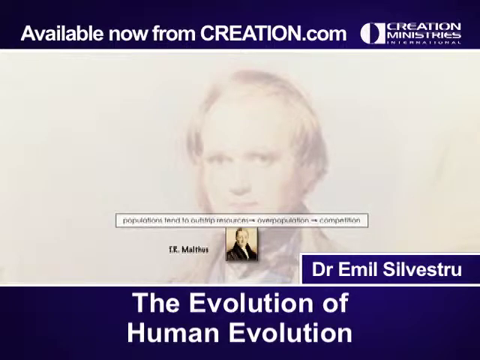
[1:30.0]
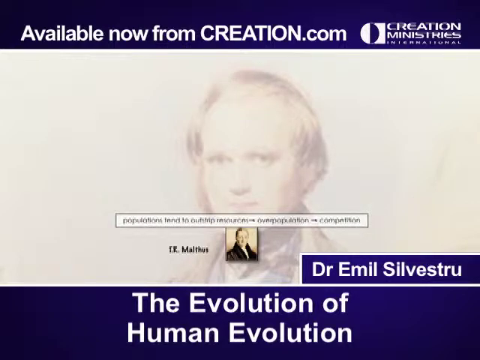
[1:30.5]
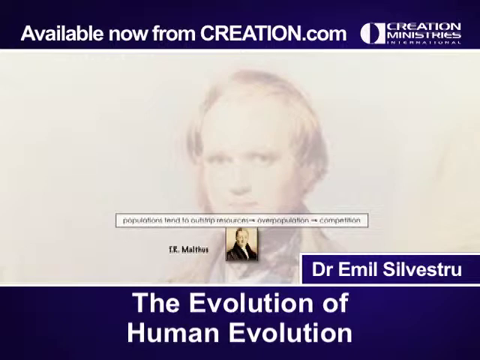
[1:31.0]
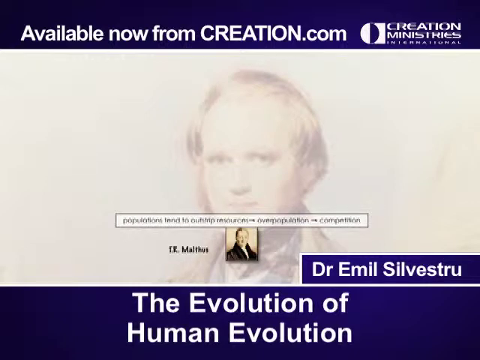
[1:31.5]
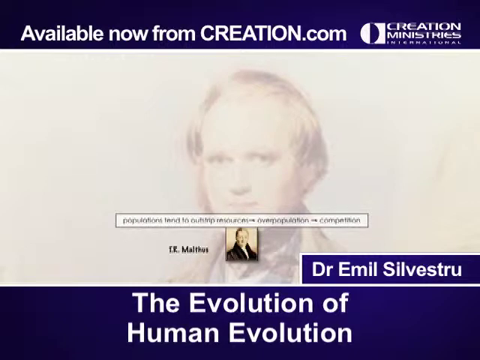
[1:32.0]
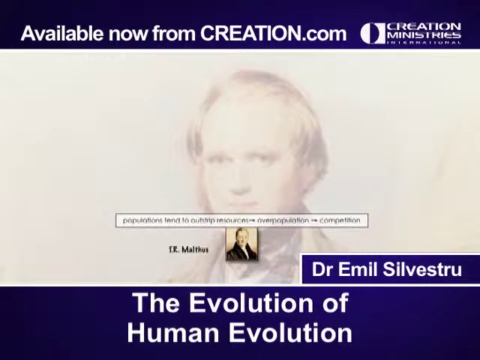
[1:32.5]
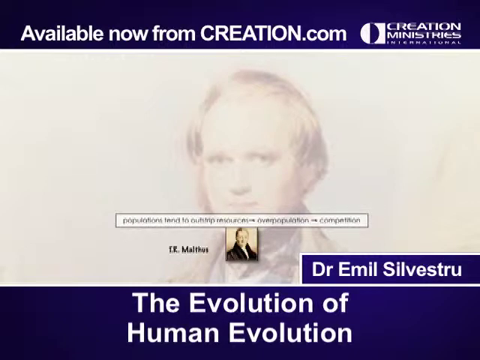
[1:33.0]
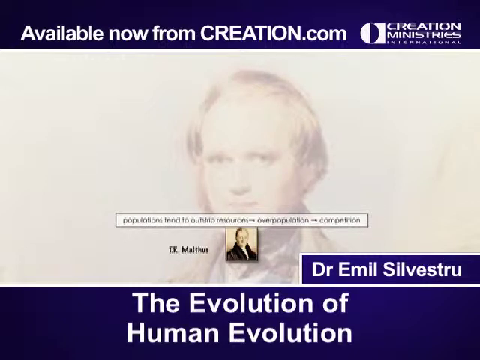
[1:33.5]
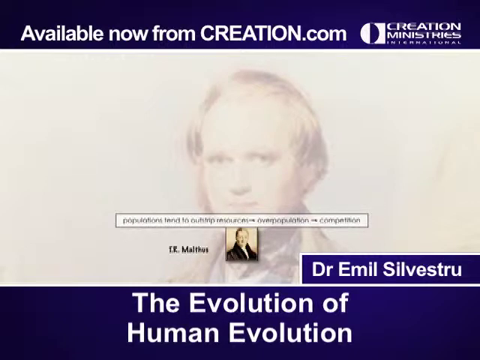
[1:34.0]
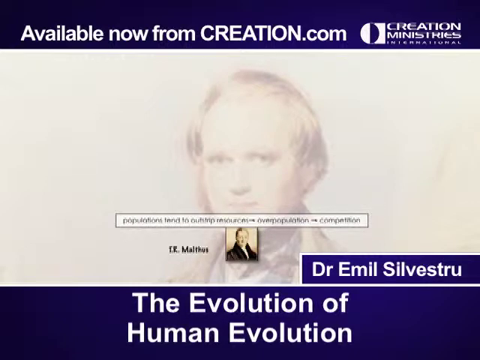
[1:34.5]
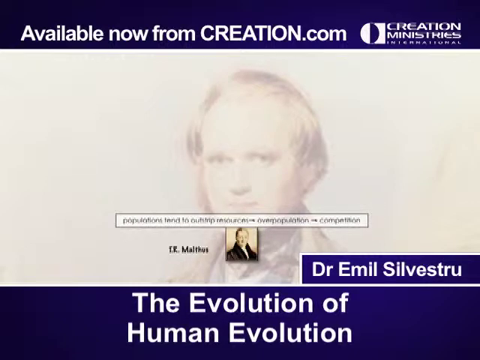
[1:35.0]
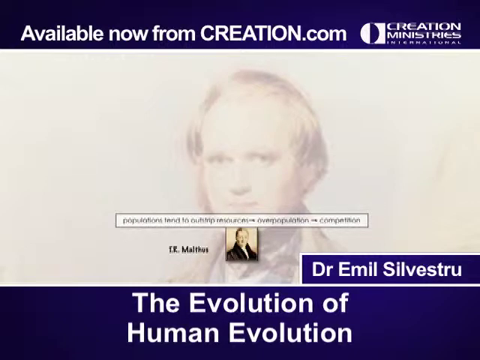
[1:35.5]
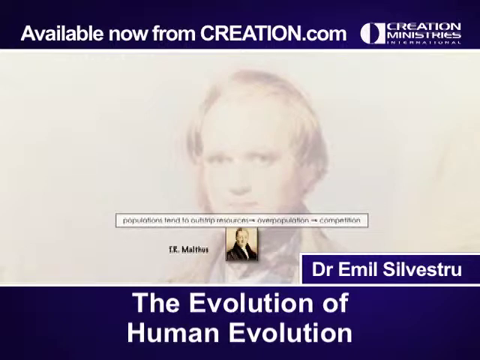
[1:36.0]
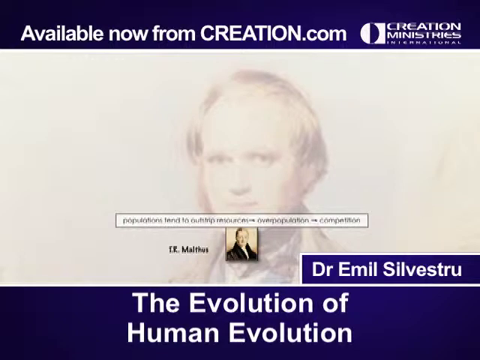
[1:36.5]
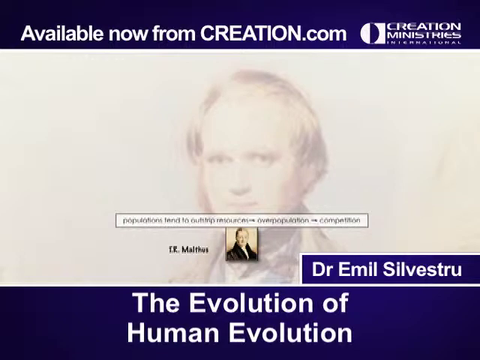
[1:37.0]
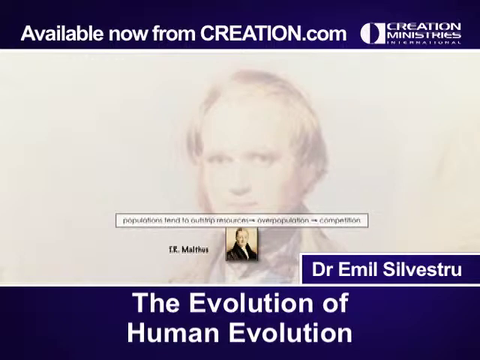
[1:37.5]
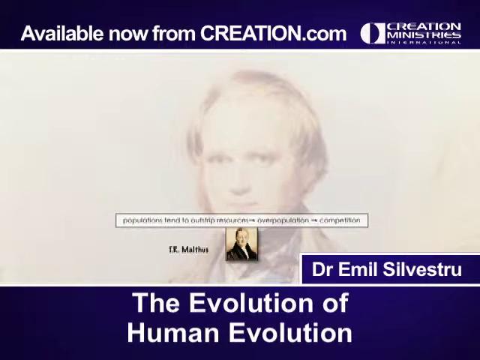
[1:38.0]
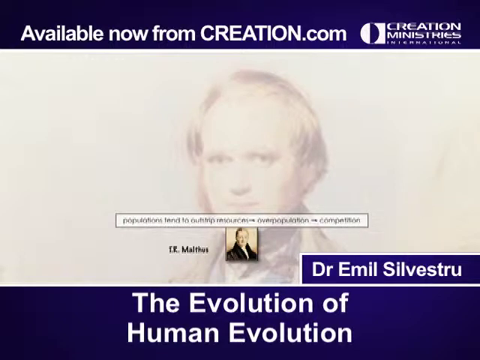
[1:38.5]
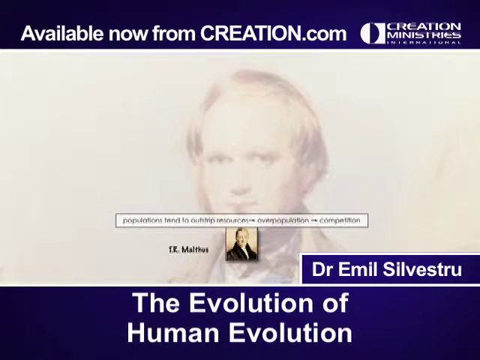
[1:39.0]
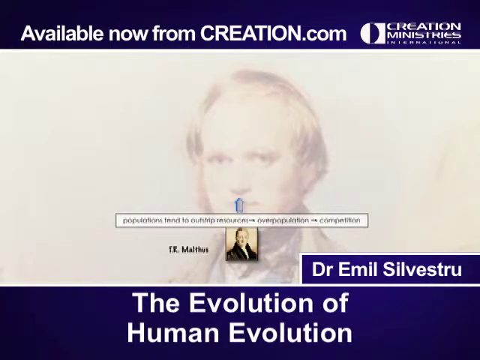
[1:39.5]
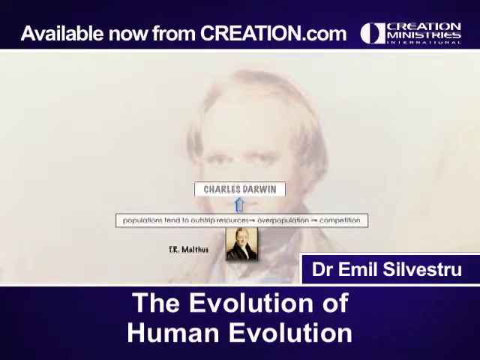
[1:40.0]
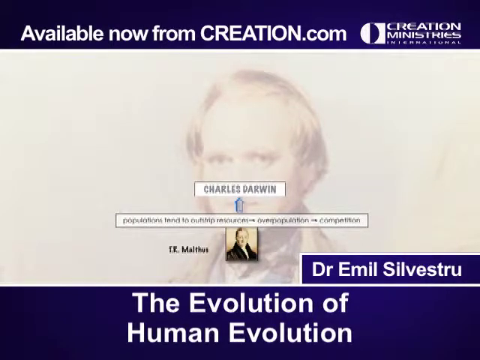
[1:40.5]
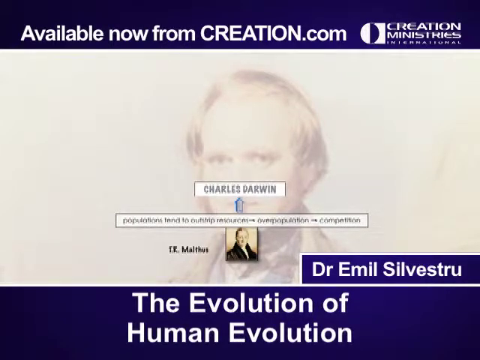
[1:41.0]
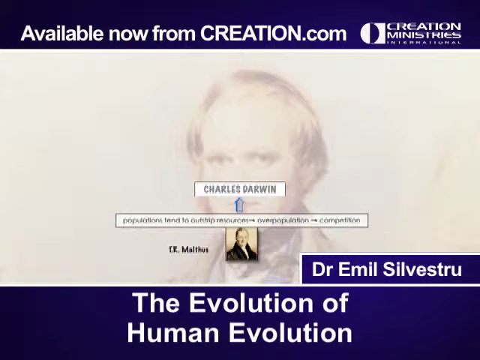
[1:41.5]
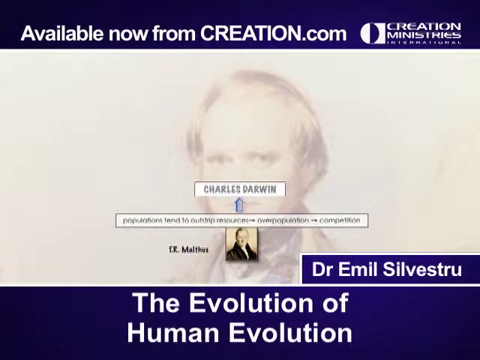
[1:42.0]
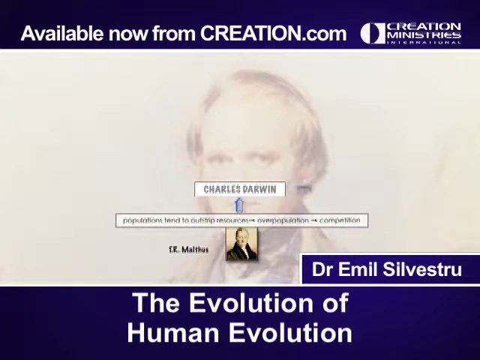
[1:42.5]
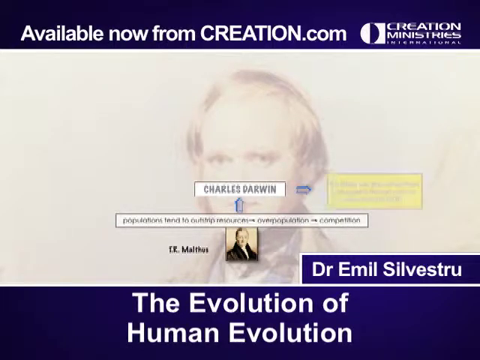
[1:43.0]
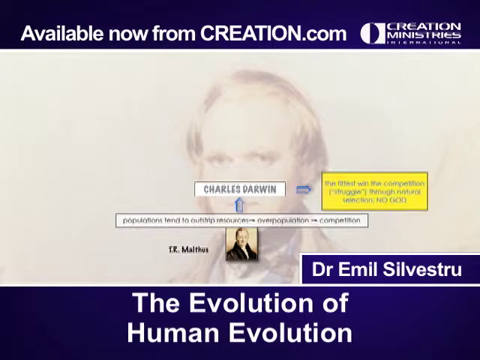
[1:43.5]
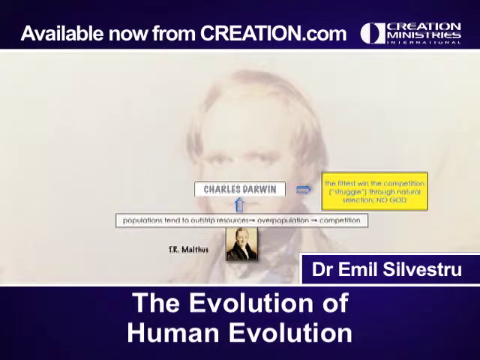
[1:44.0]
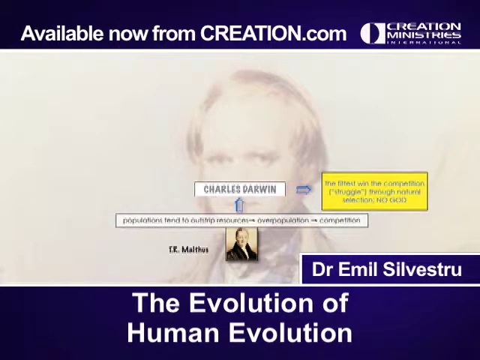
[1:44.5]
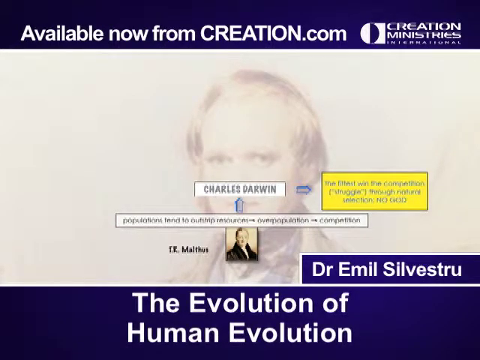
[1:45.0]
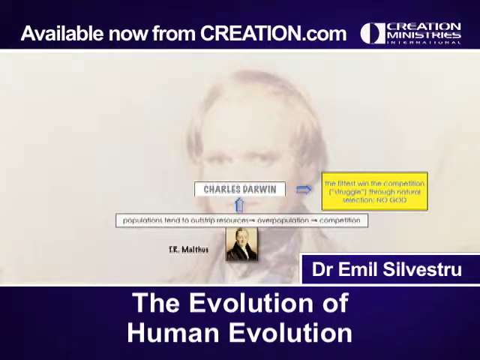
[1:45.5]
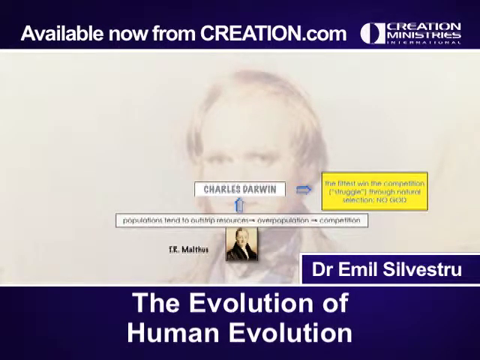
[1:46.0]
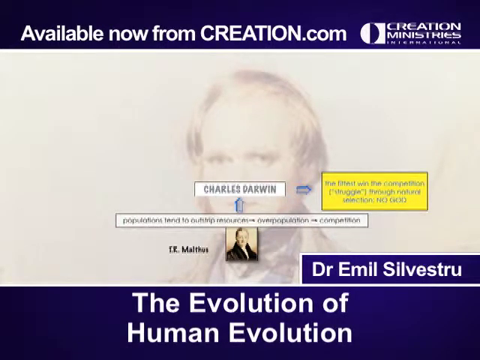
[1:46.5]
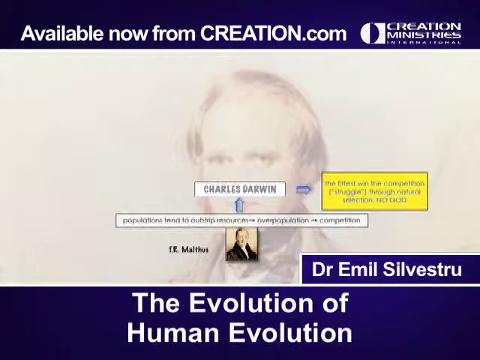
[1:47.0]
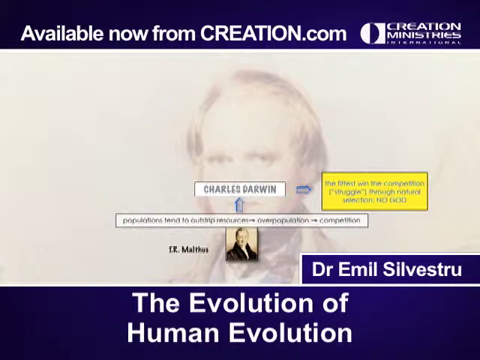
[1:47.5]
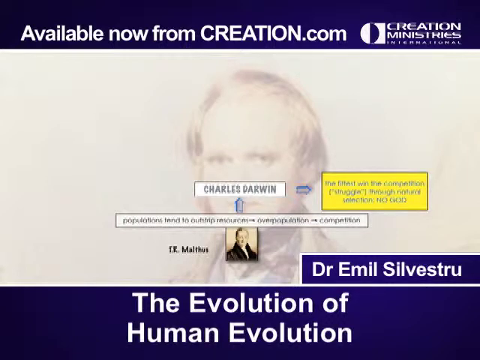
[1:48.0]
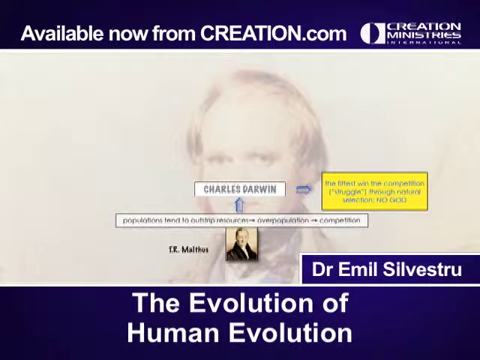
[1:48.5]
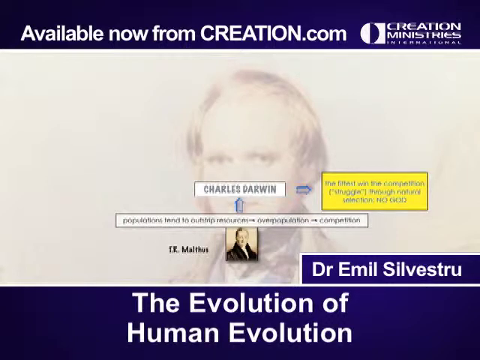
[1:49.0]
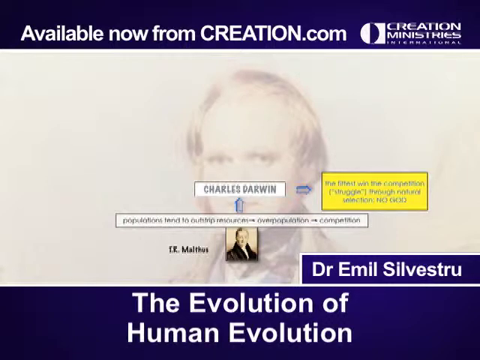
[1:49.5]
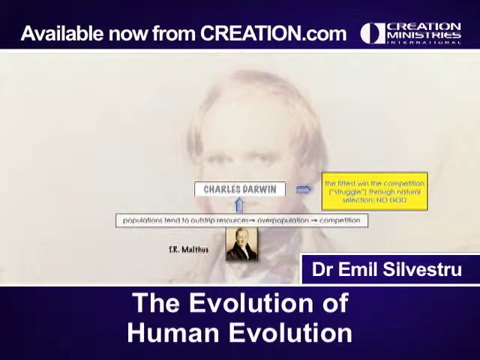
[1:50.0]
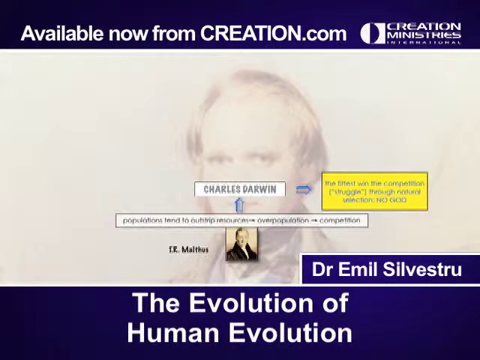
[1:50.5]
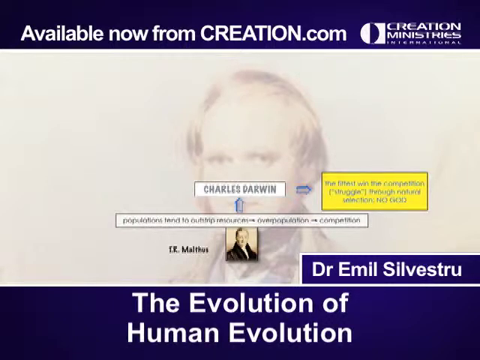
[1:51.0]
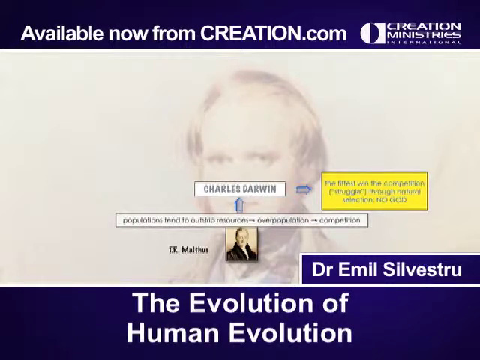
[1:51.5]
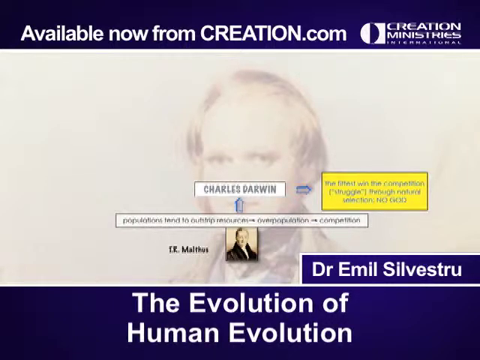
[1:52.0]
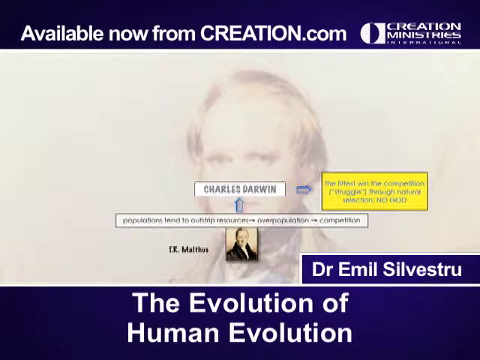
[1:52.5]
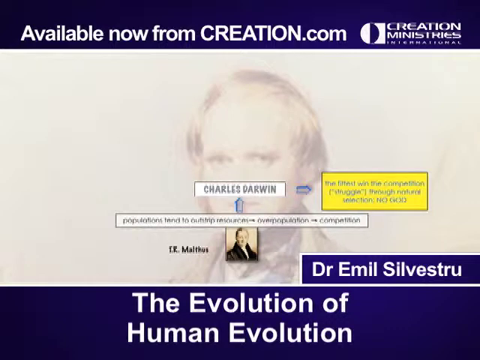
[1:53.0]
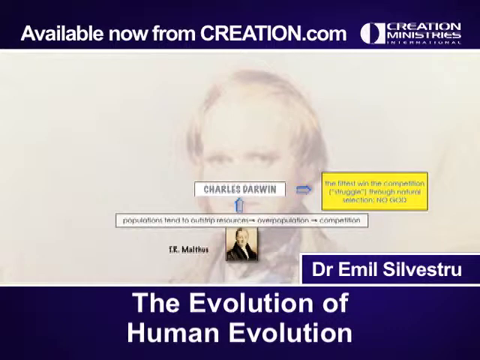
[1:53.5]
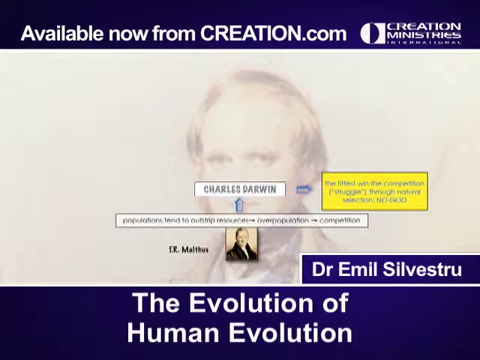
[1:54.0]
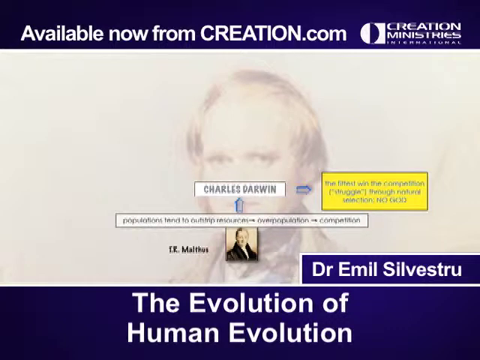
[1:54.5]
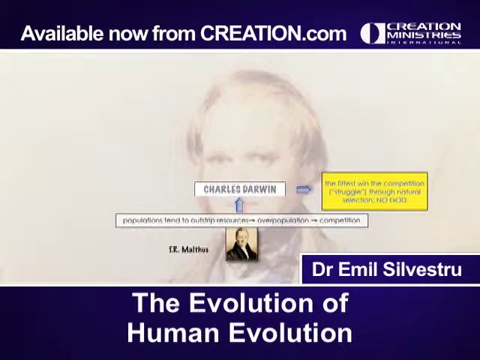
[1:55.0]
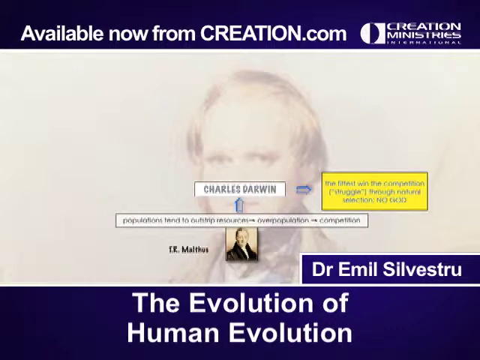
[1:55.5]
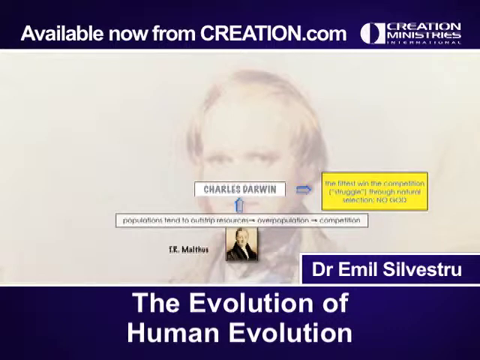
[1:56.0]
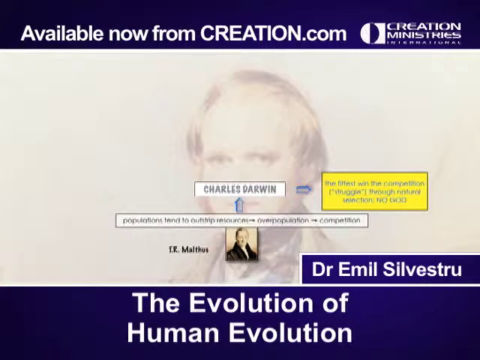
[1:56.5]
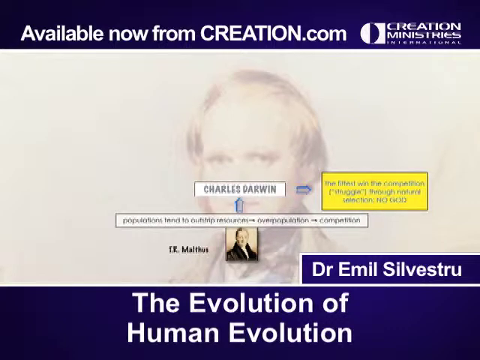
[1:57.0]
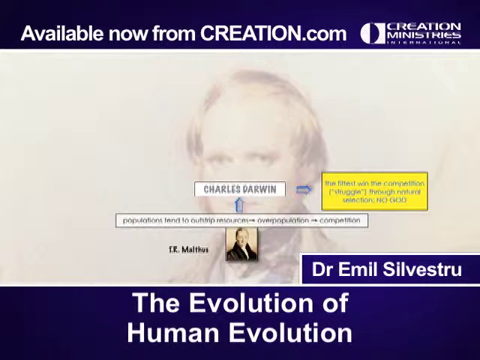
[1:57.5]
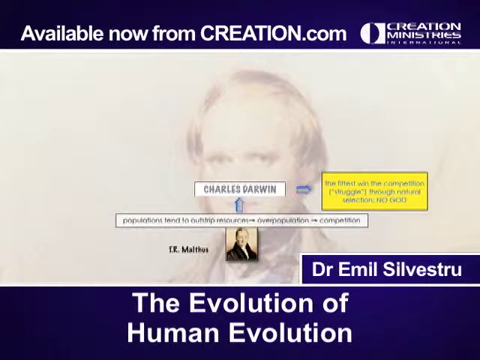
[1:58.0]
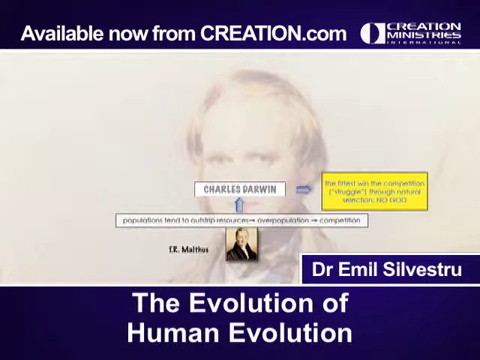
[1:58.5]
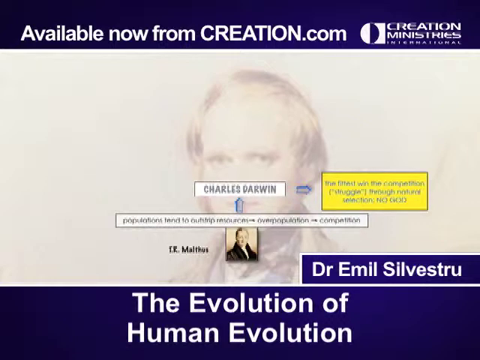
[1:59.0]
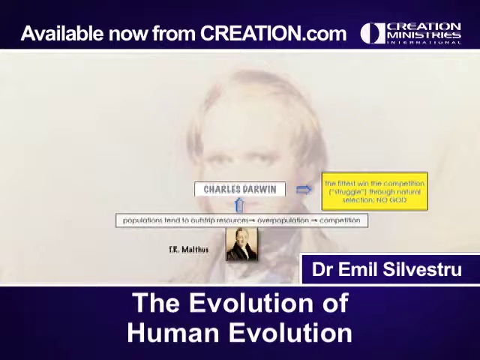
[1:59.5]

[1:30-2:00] The illustration of the man with the big sideburns stays in the background. He has blonde, receding hair that is kind of shaggy and long, coming down over the top half of his ears. An arrow pointing up appears along with "Charles Darwin" inside a white rectangle with a slight black outline. A blue arrow appears to the right of the "Charles Darwin" text, next to a yellow rectangle outlined in black containing the text "the fittest win the competition through natural selection". At the bottom of the screen, sort of superimposed over the man's chin, is a very small portrait; it is hard to make out who is in it, but the man appears to be wearing a black jacket.